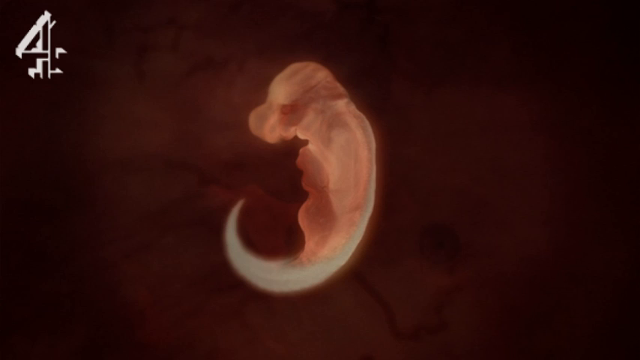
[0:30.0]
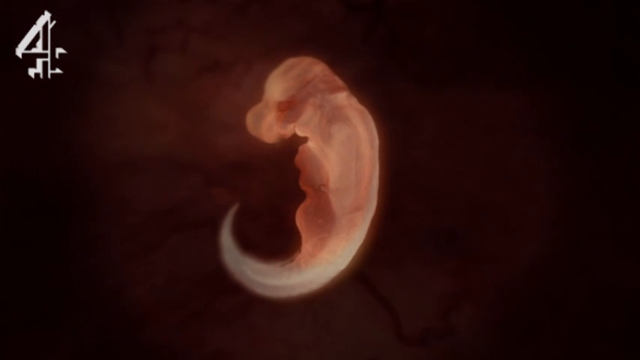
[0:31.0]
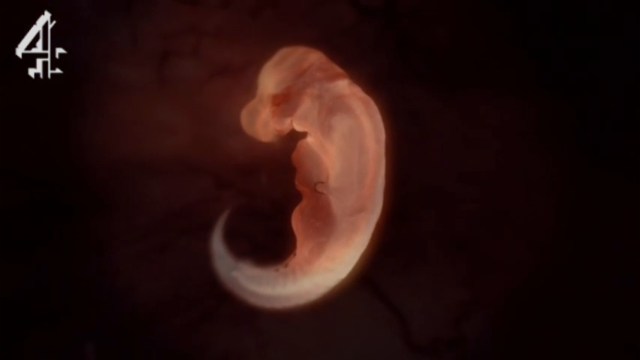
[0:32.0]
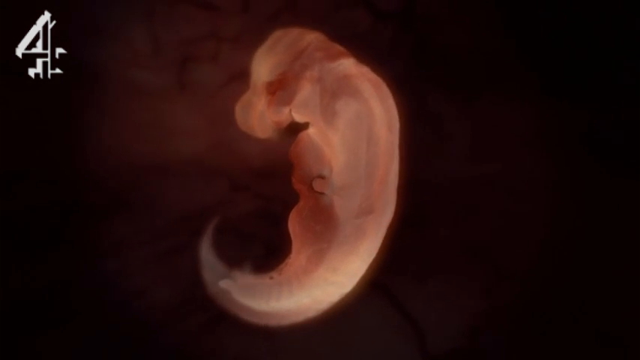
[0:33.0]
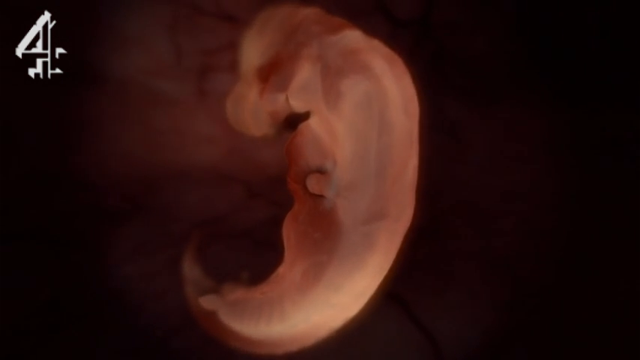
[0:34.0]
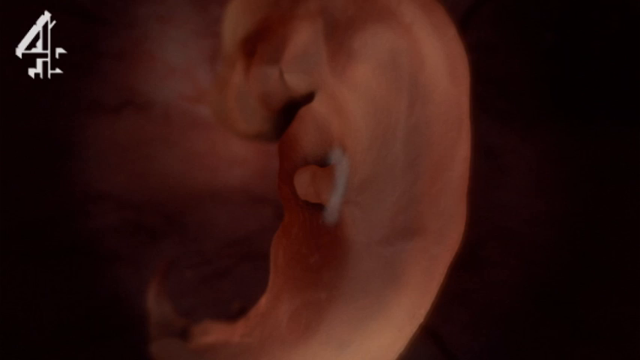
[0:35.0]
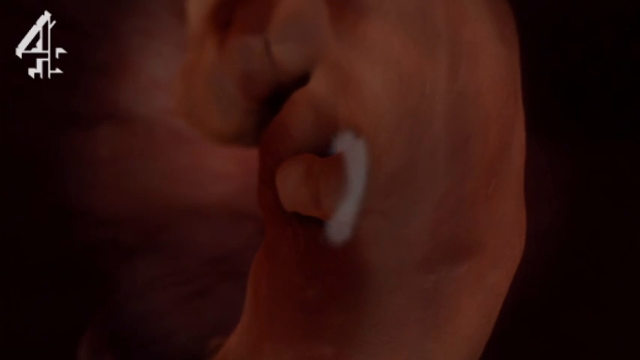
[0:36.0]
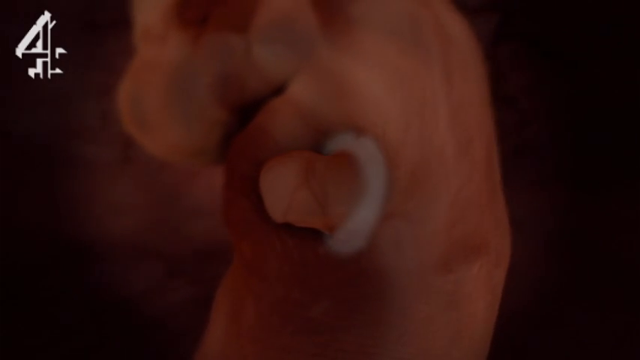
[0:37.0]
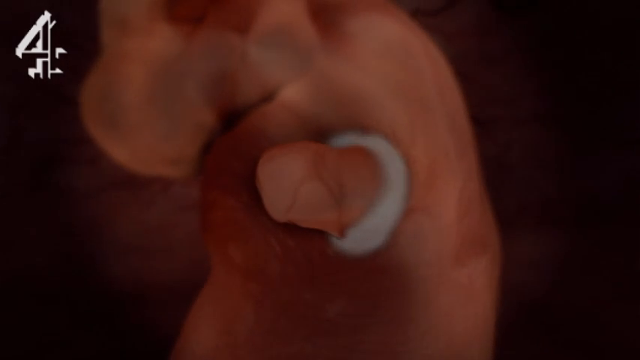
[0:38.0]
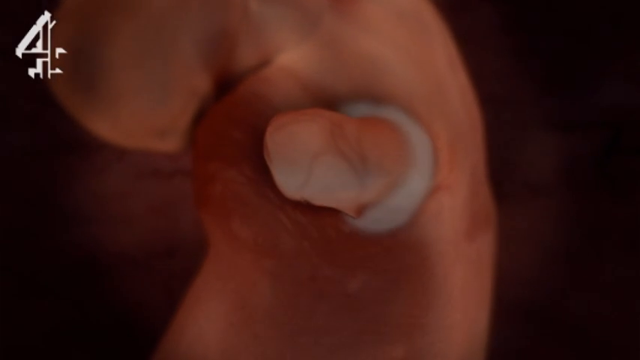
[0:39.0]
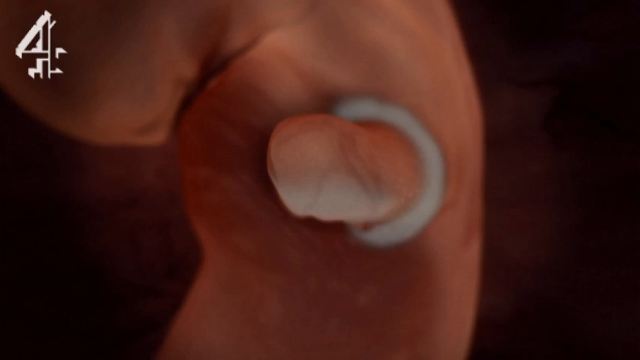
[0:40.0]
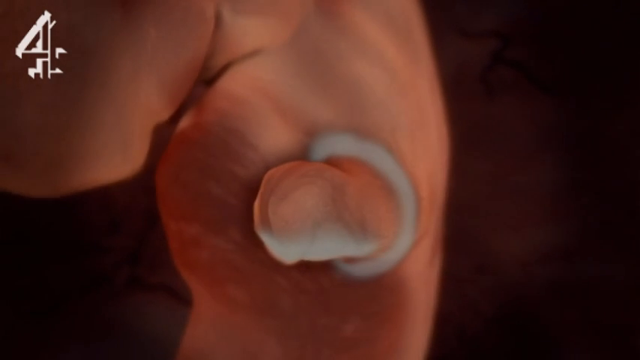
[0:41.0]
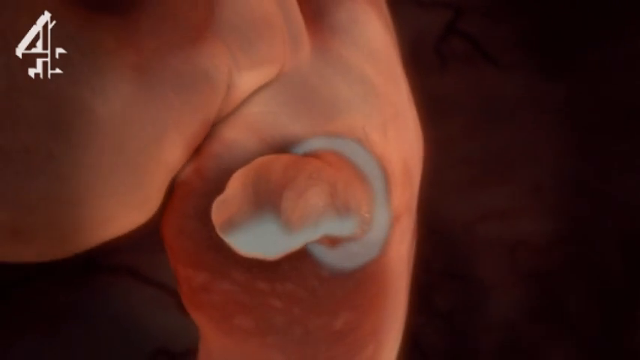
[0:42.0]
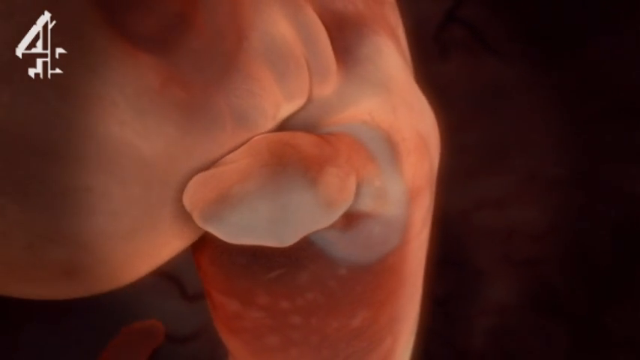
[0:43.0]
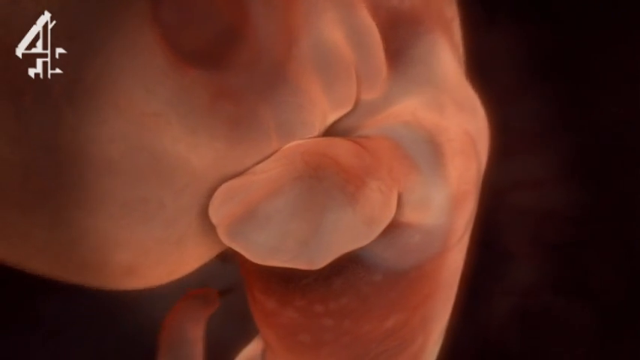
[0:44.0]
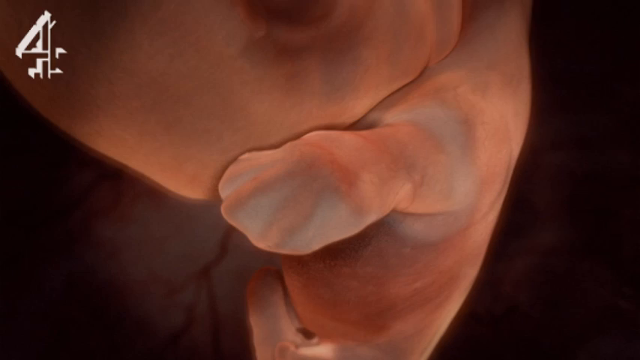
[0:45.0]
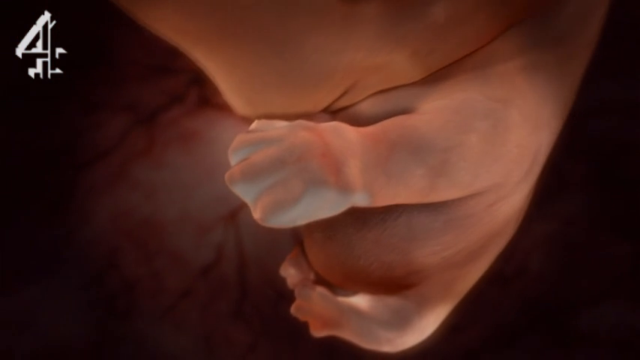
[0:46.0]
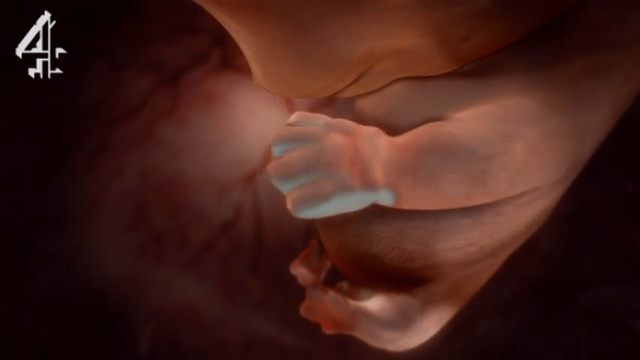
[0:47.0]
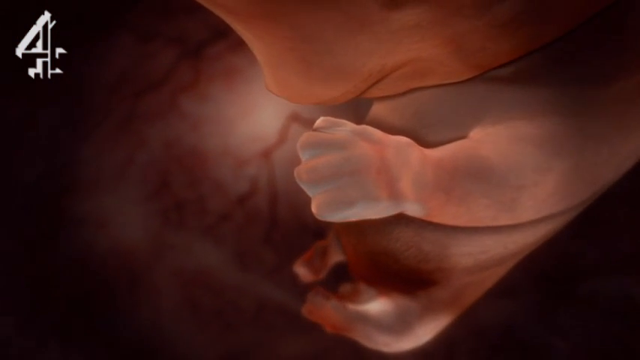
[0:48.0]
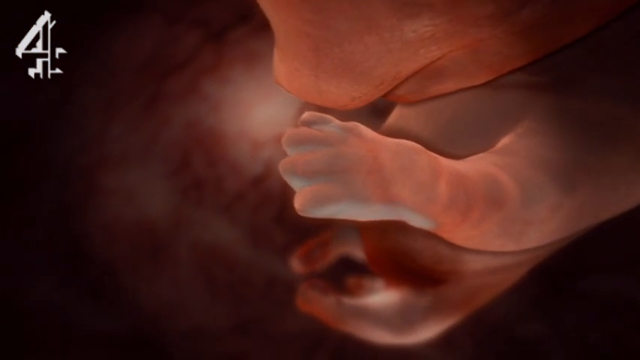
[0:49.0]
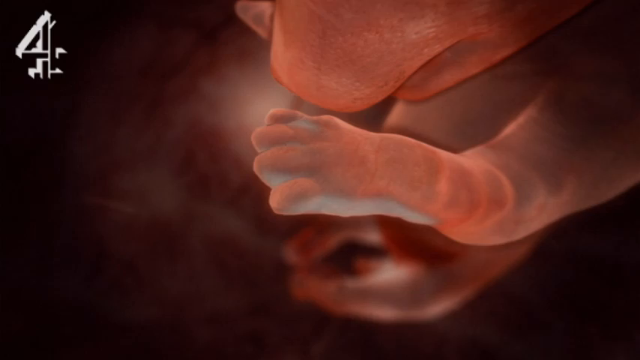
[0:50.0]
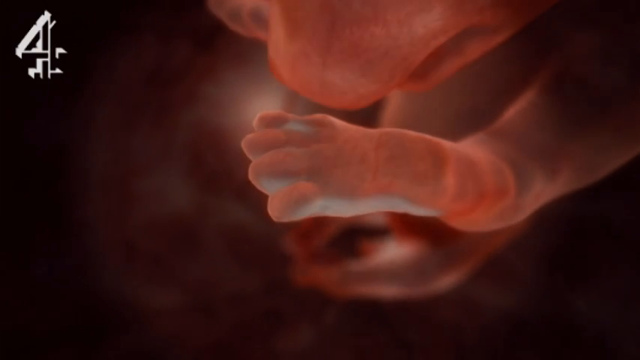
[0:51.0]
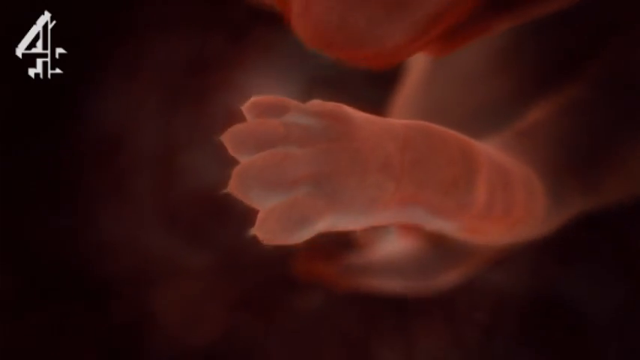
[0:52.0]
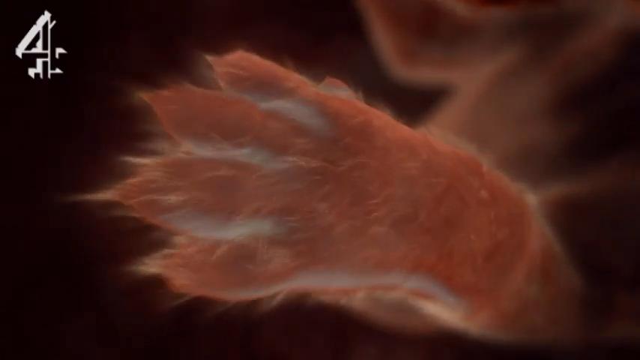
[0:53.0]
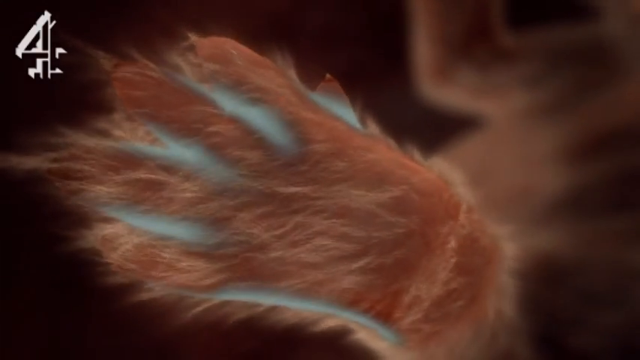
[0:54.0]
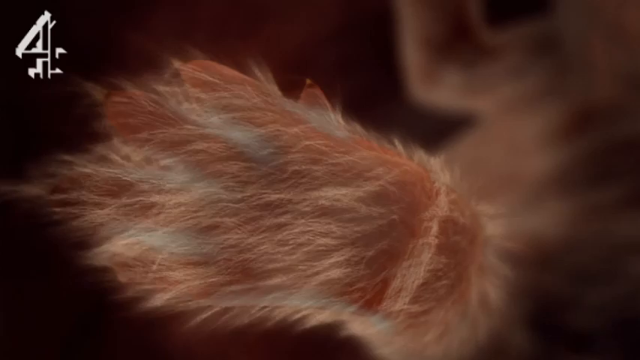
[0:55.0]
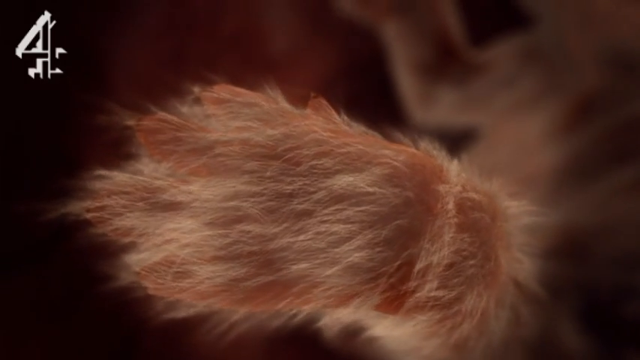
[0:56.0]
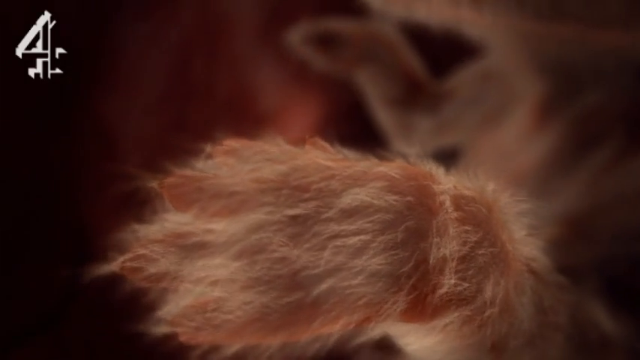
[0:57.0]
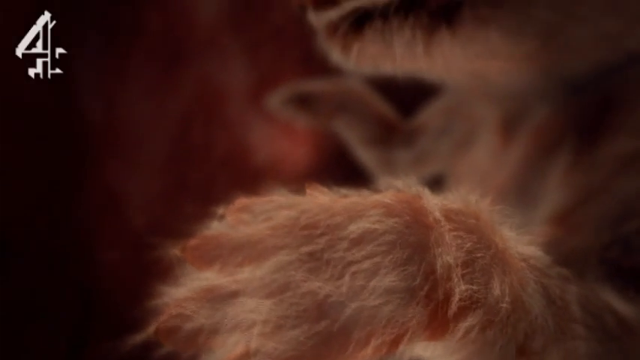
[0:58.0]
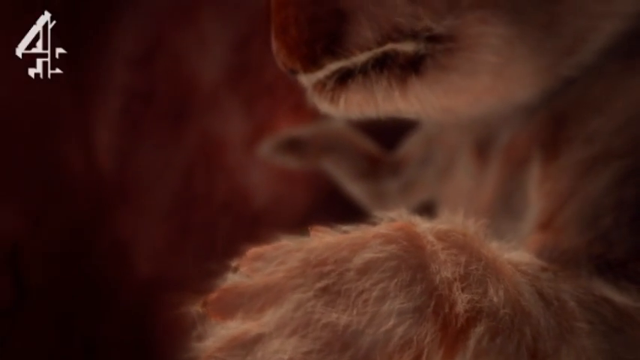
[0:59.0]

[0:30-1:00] The backdrop is an almost black to dark red maroon tint behind a misshapen object, with a round part toward the back. The object gets larger. An appendage seems to grow larger from the left side, and as it grows and comes out it takes shape, with four items sticking out. There is a wrist, and multiple thin white objects are growing out of it. The top left portion of the object moves around, turning so that more of its left side is visible. The appendage looks as if it has four distinct small areas sticking out, with a very small area on the inside. The object seems to come closer toward the screen while the round part turns back toward the back of the screen. The object also has a white pointed area coming down from its very bottom, with a lighter whitish tan area running from that point up the back right side. The entire object is in the middle of the screen.